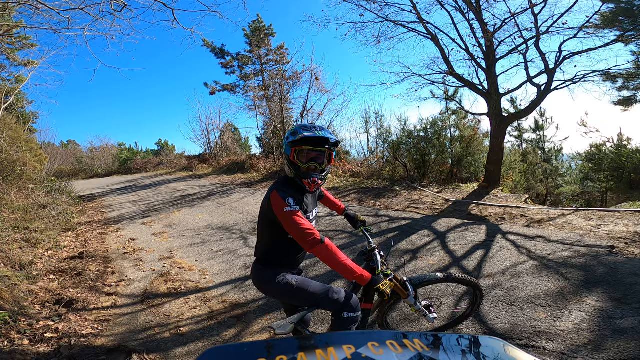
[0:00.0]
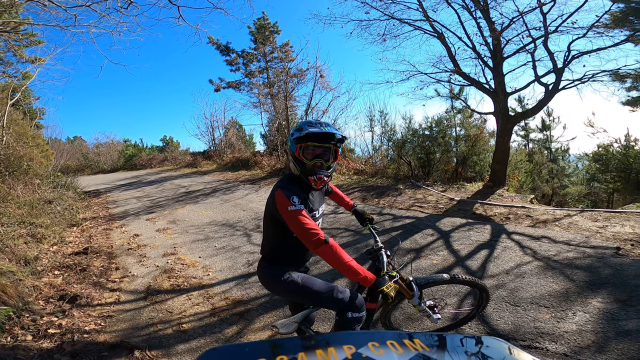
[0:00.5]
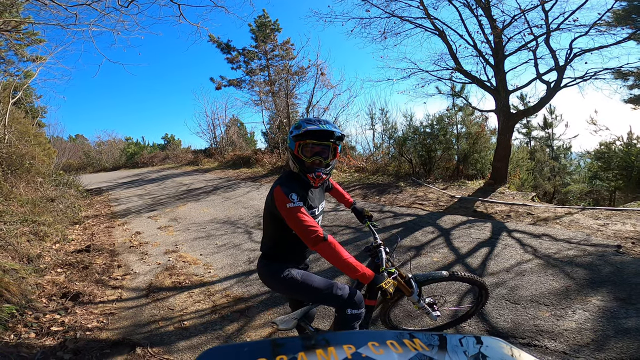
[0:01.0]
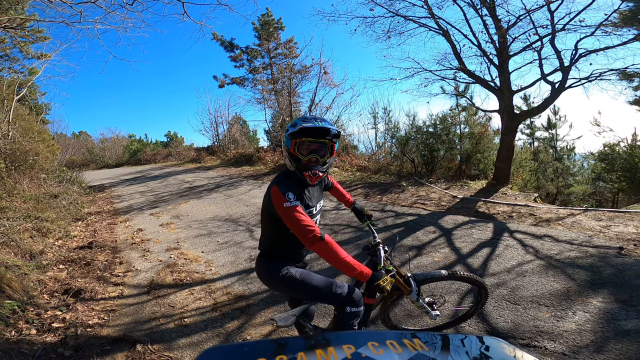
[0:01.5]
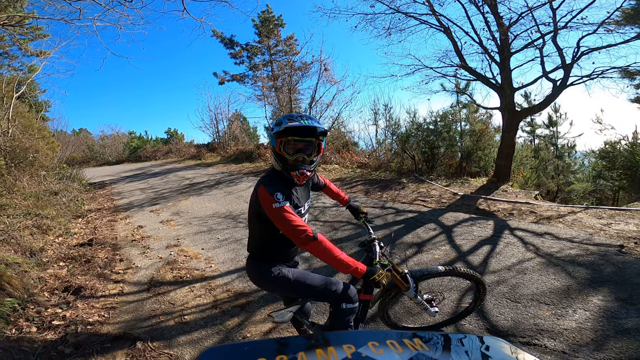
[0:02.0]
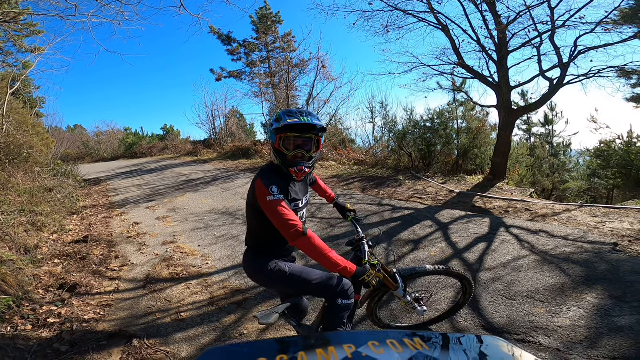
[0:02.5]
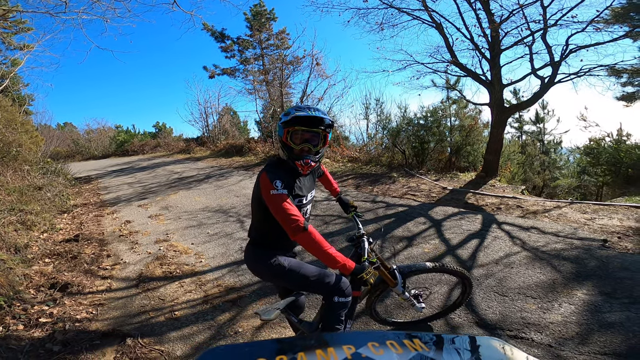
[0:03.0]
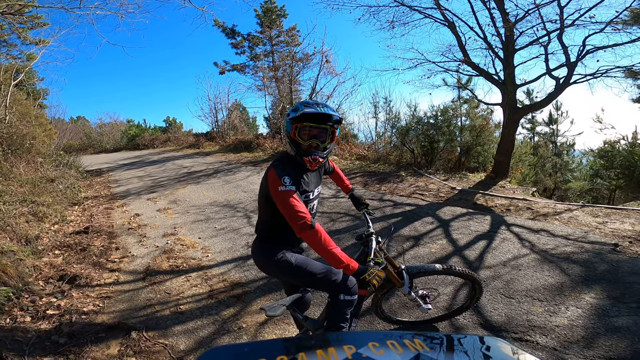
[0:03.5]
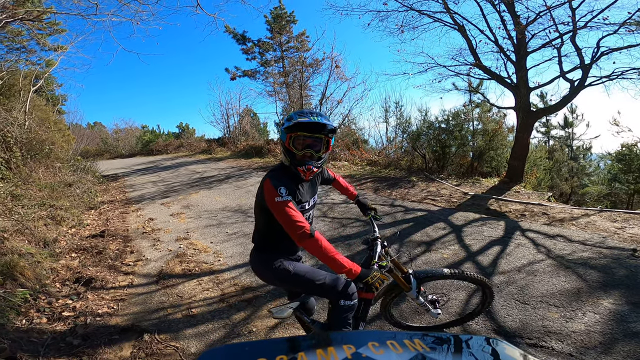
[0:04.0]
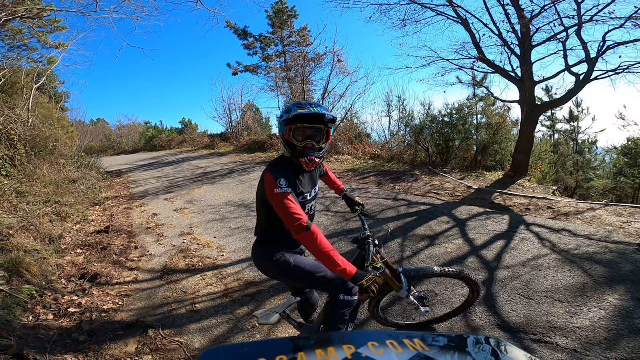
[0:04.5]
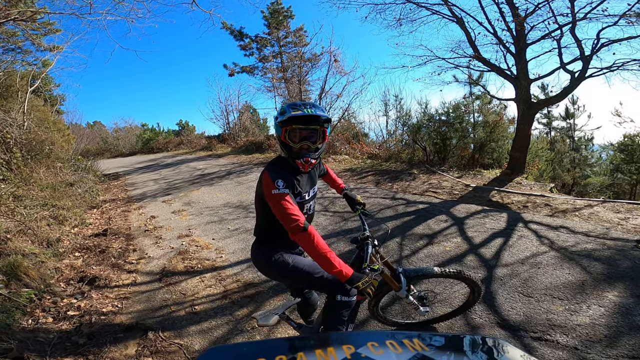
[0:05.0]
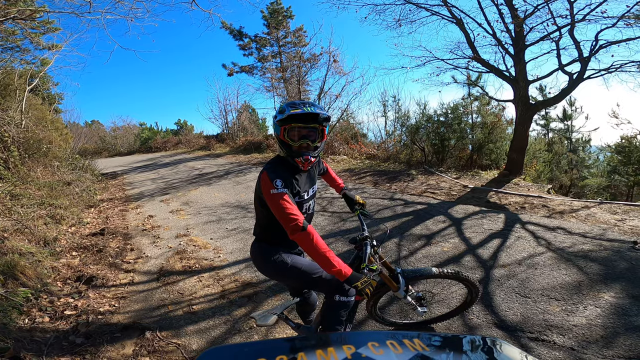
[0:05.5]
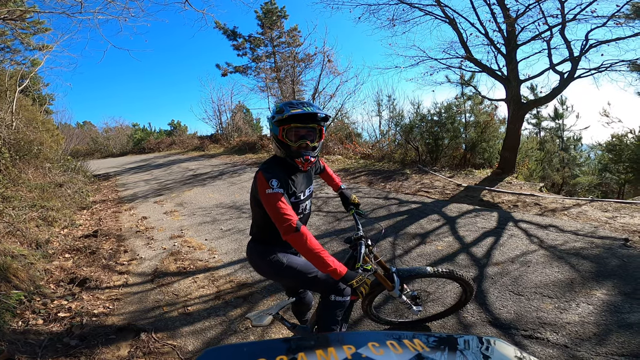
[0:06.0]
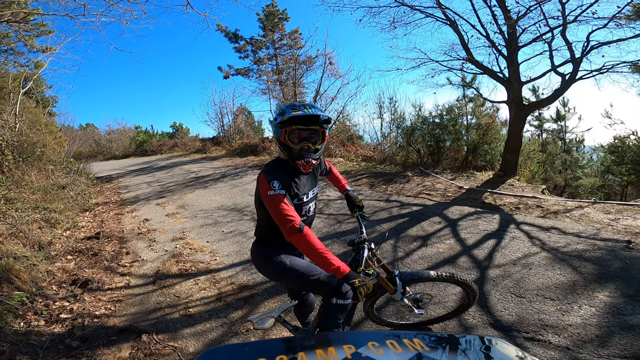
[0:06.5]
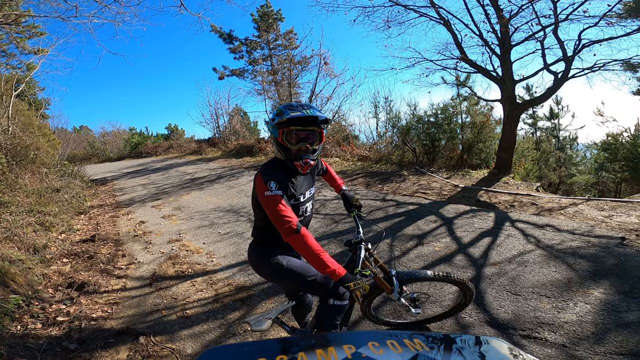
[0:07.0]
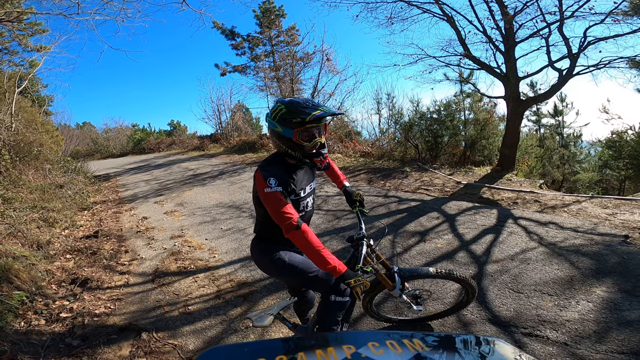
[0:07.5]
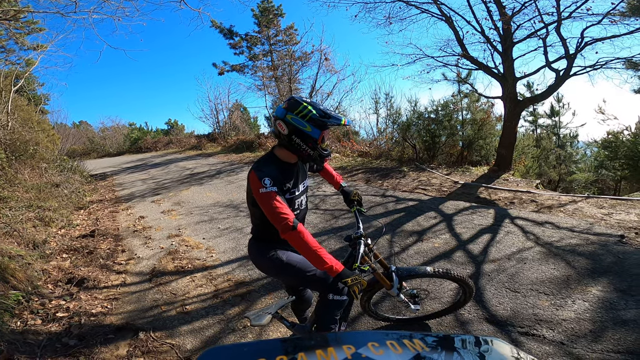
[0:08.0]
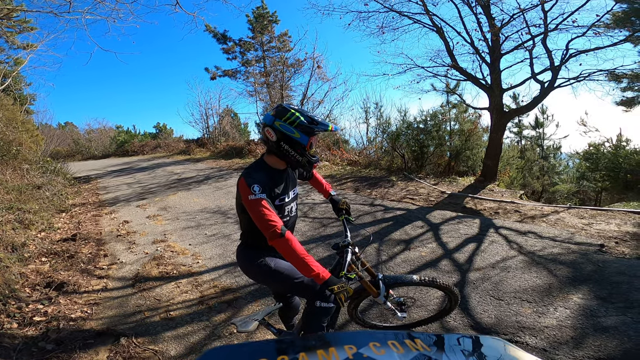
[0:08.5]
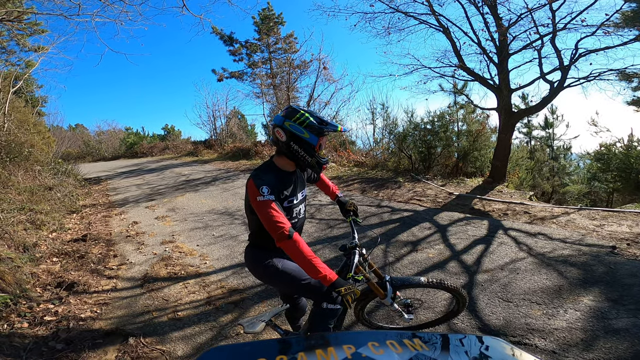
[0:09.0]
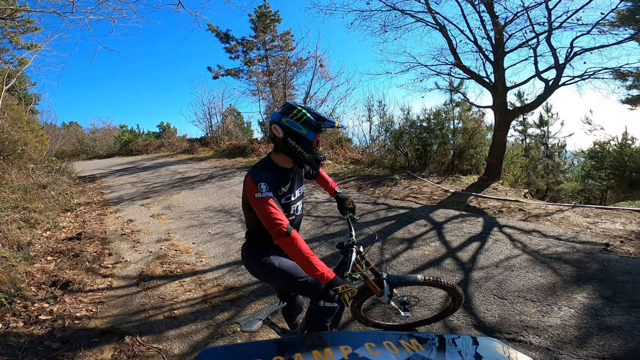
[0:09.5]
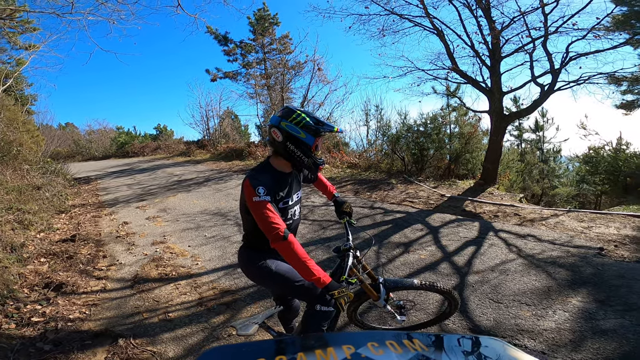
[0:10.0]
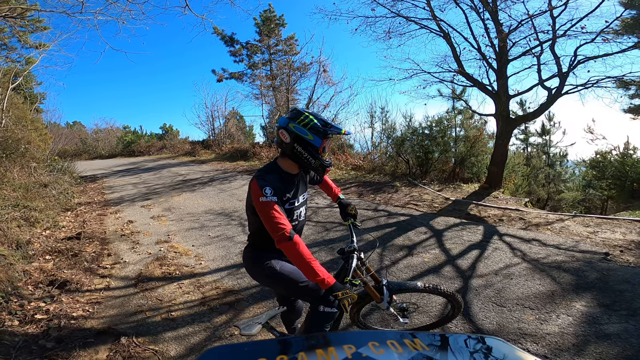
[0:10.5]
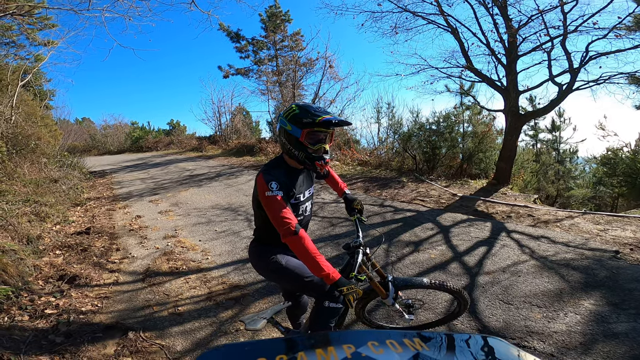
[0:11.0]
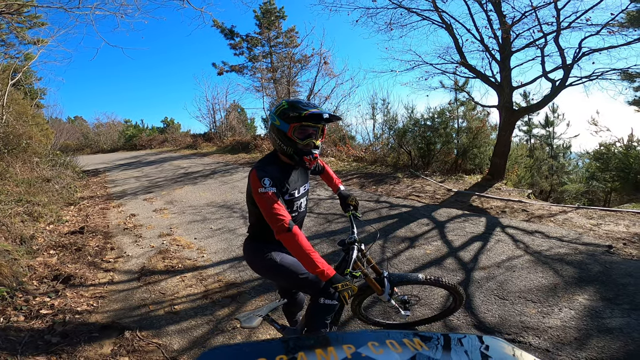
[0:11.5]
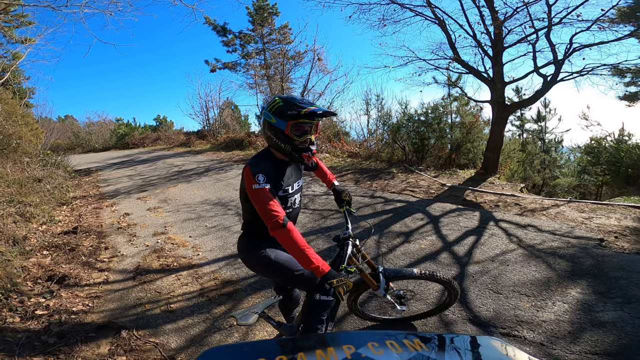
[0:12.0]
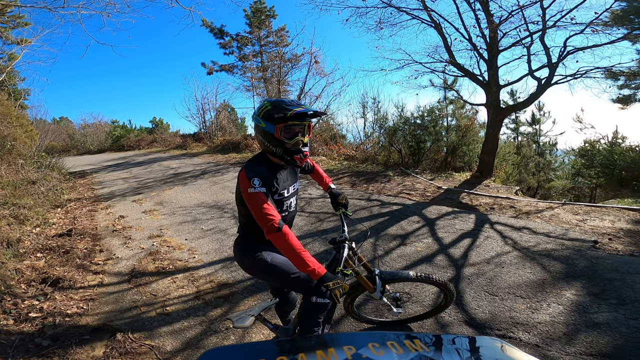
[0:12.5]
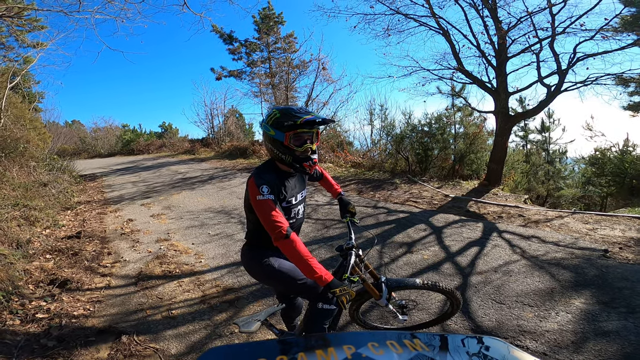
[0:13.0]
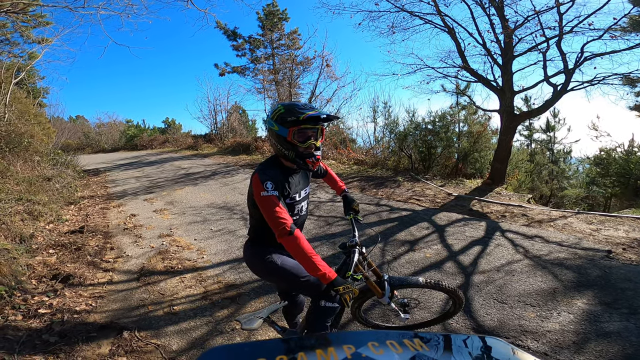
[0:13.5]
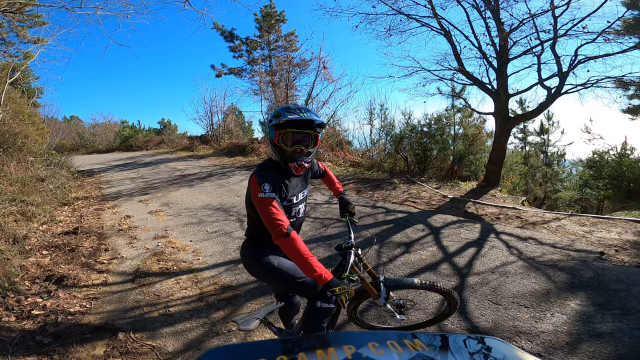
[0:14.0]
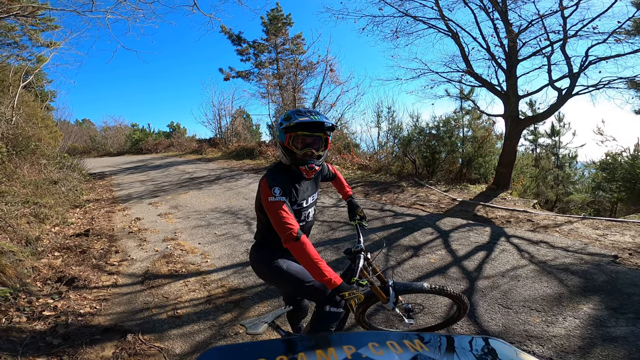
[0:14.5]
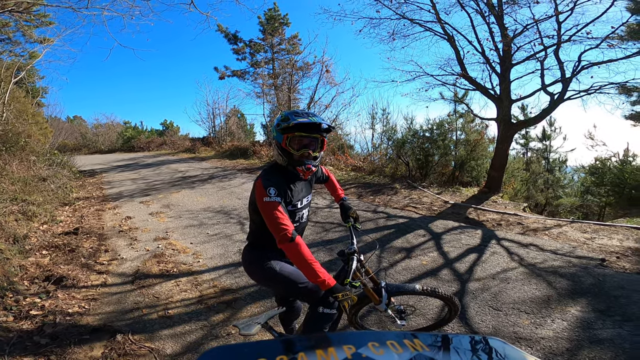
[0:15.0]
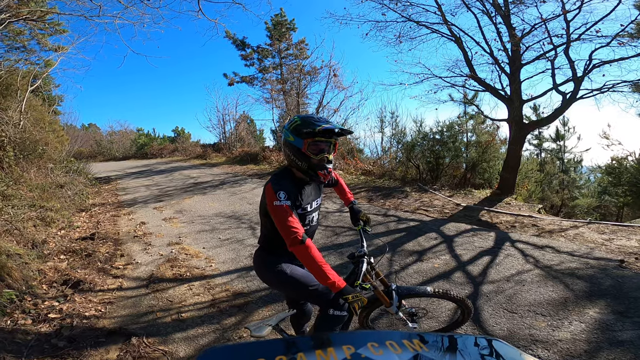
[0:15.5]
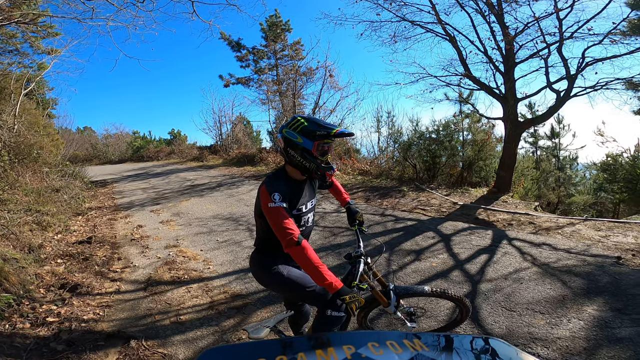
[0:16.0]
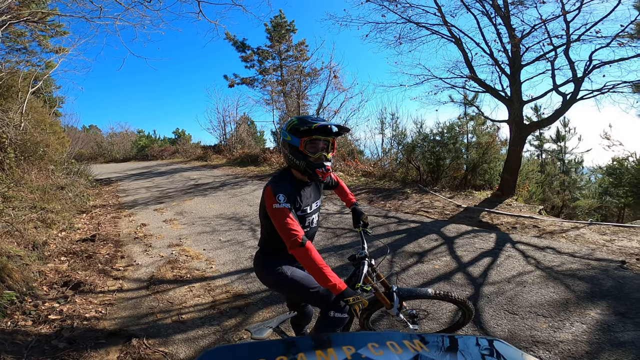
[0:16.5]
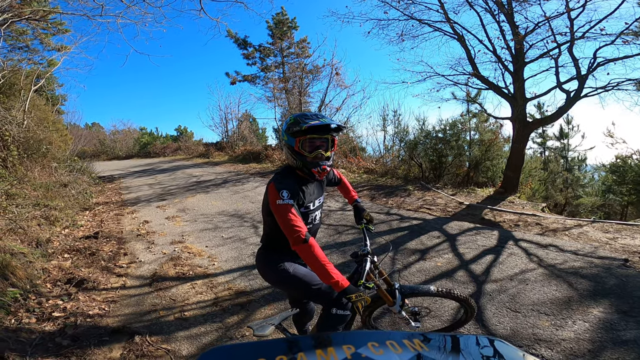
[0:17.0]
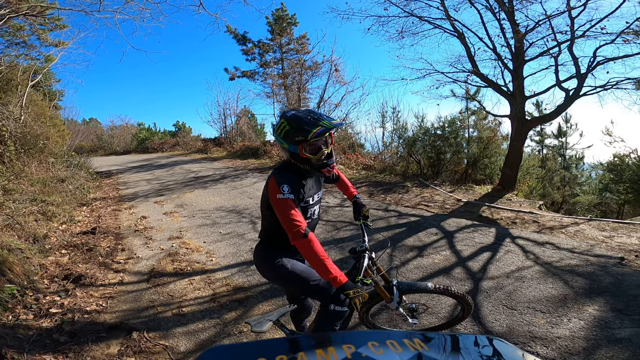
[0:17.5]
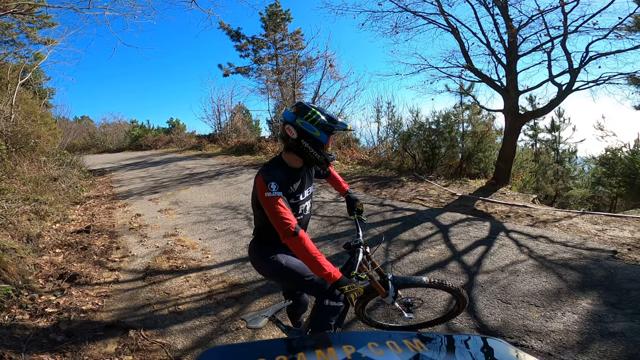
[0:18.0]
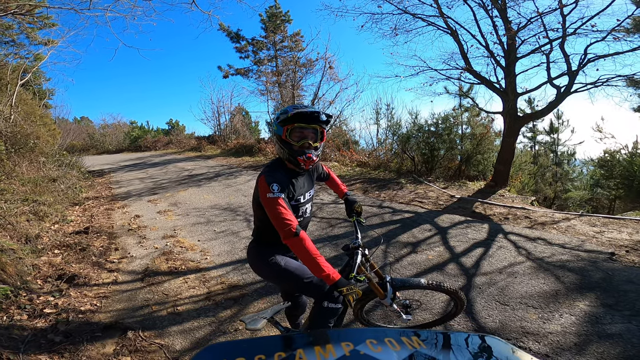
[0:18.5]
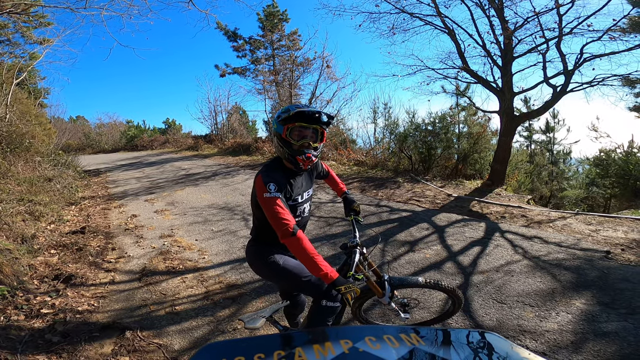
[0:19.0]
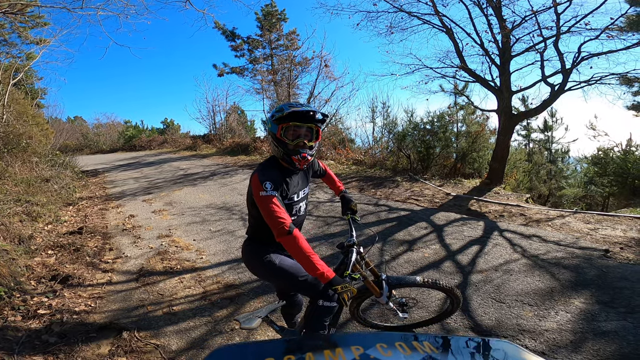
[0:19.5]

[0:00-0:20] A person is on a bike, almost wearing dirt bike gear: kind of a helmet, glasses and a red and black shirt. The view is roughly from the side, but the rider's face is turned toward the camera. It looks like a fall day, with some leaves in the background. The rider is on a road with trees on the right side, under clear blue skies with a few clouds; the trees have no leaves. The rider stares at the camera while slowly moving a little to the right and back, leaning the bike forward maybe an inch and then back. He may be talking, but the helmet covers his mouth. He looks away from the camera, more straight ahead, then back at the camera, continuing to look away and back while moving his head left to right. His bike and most of his body face left to right, both hands are on the handlebars, and his head is turned toward the camera.